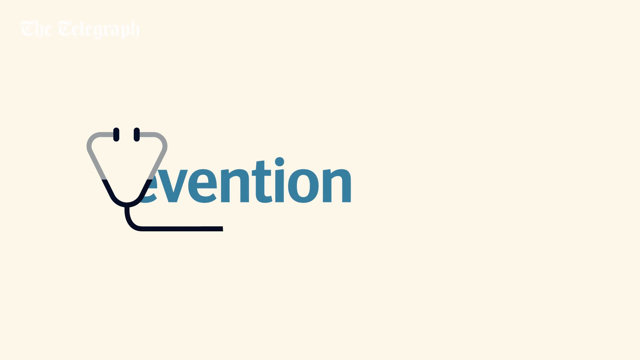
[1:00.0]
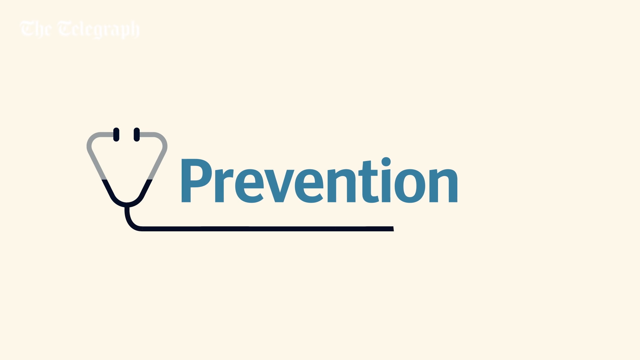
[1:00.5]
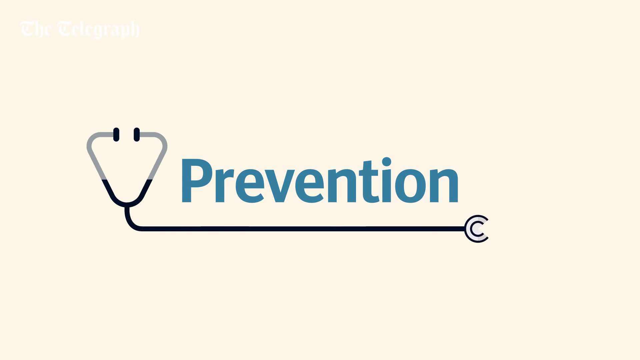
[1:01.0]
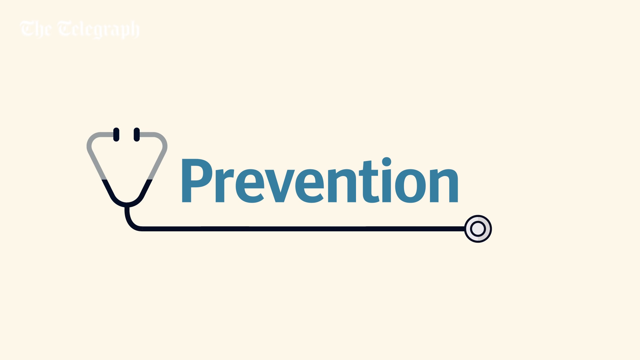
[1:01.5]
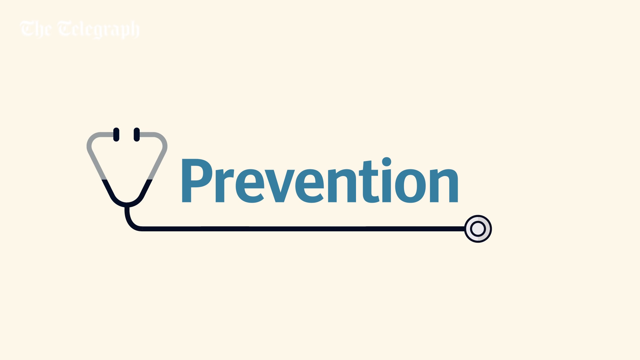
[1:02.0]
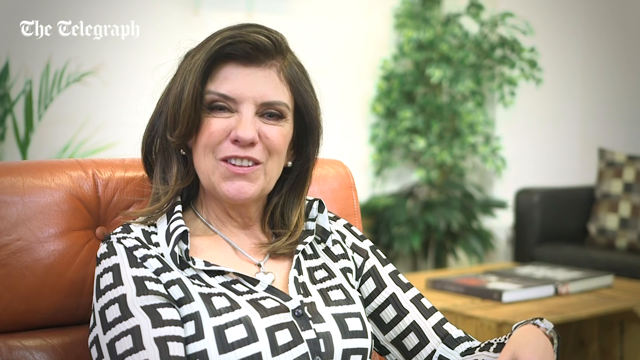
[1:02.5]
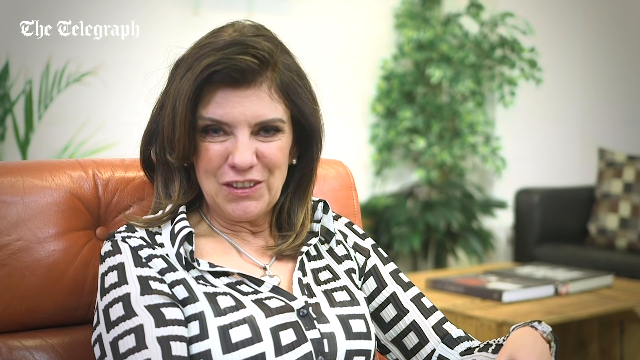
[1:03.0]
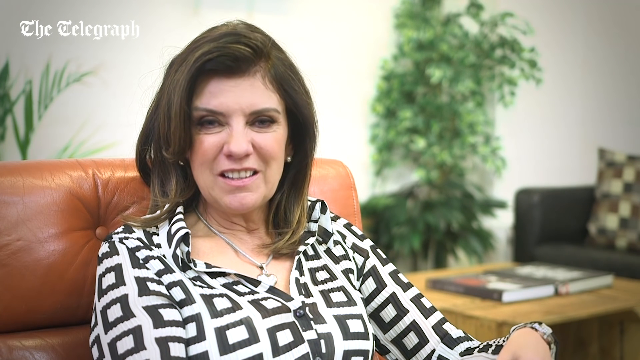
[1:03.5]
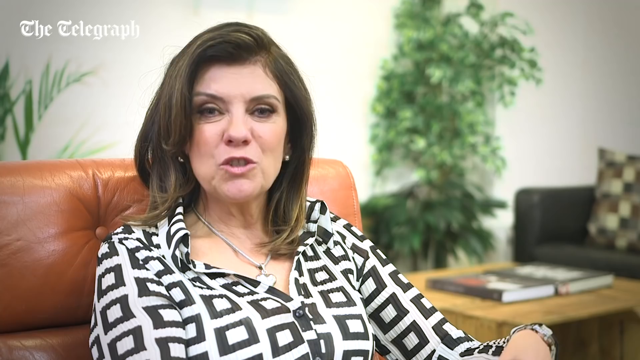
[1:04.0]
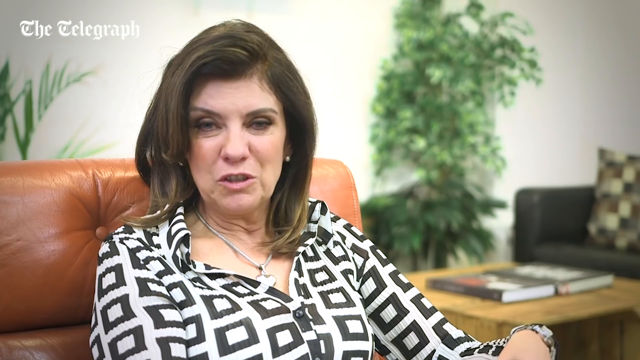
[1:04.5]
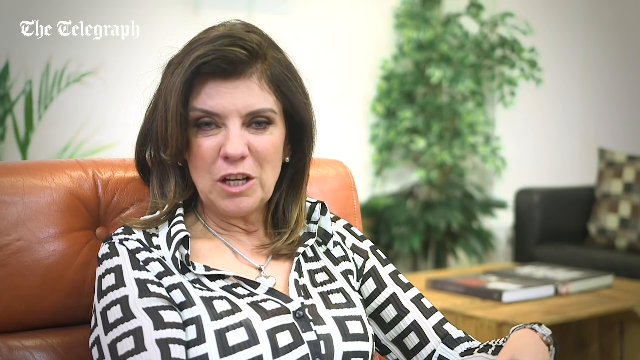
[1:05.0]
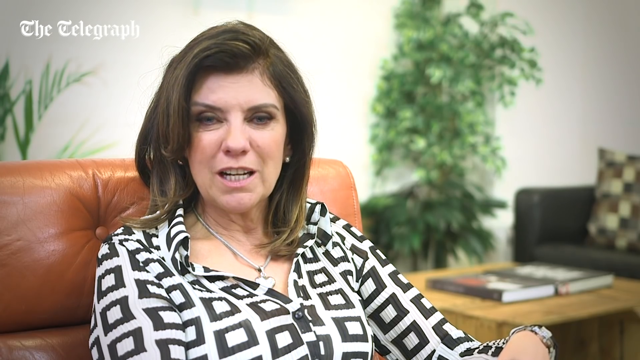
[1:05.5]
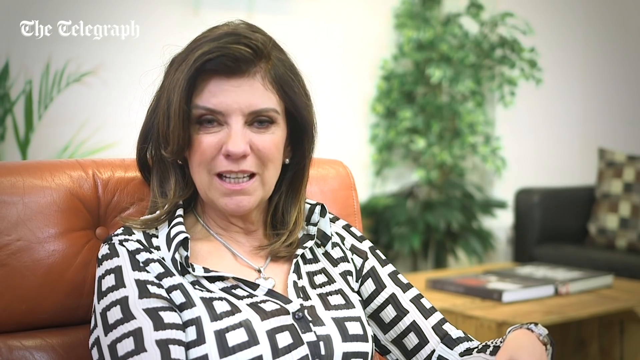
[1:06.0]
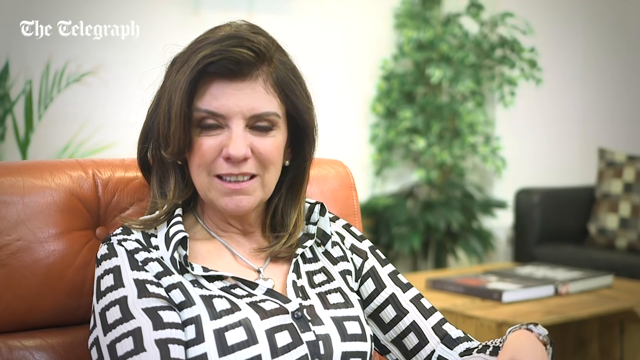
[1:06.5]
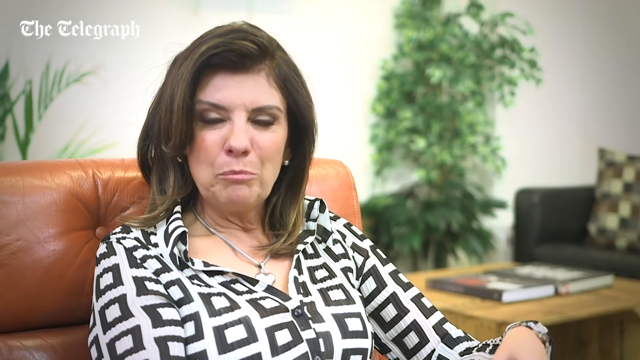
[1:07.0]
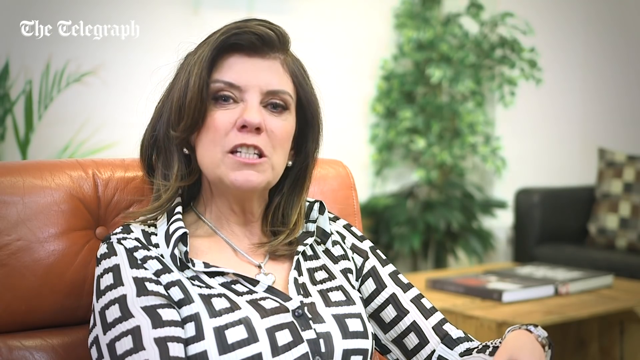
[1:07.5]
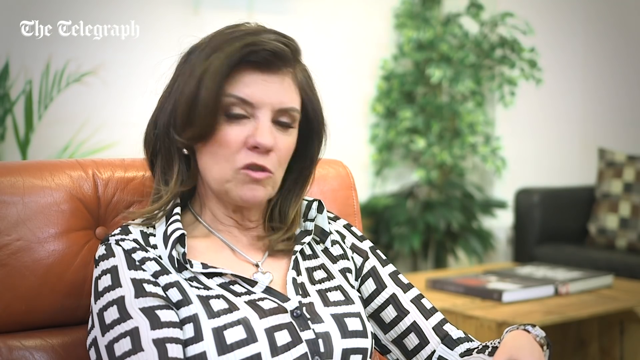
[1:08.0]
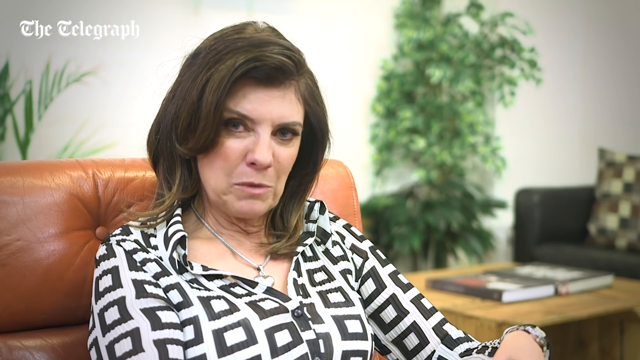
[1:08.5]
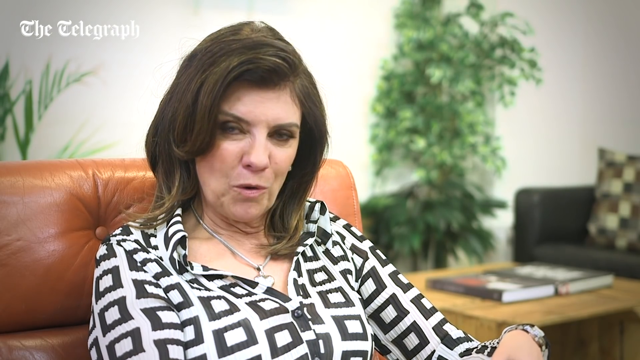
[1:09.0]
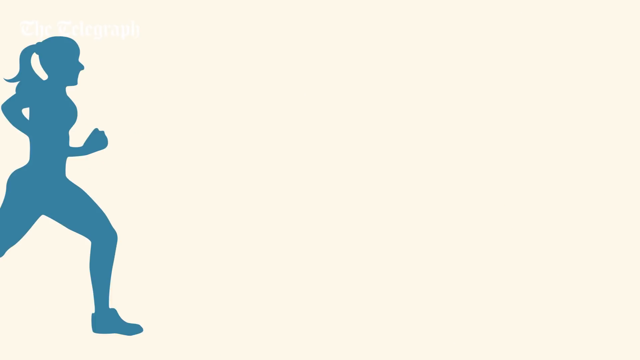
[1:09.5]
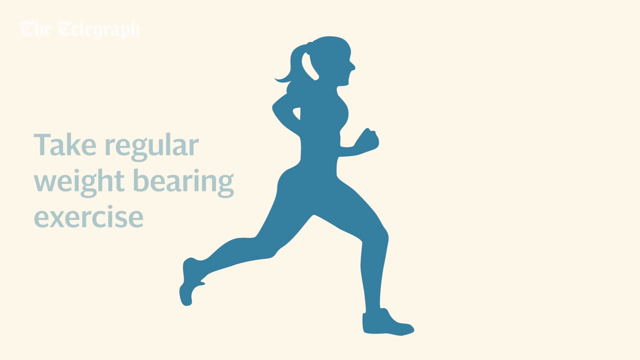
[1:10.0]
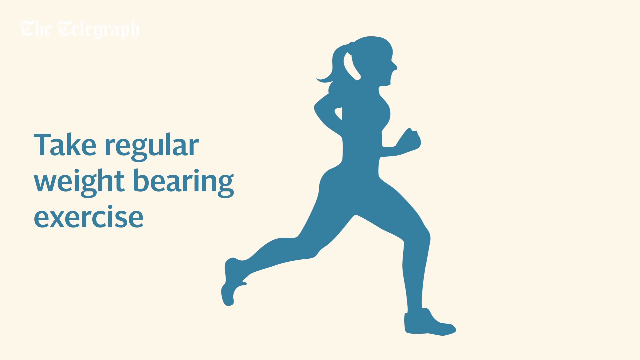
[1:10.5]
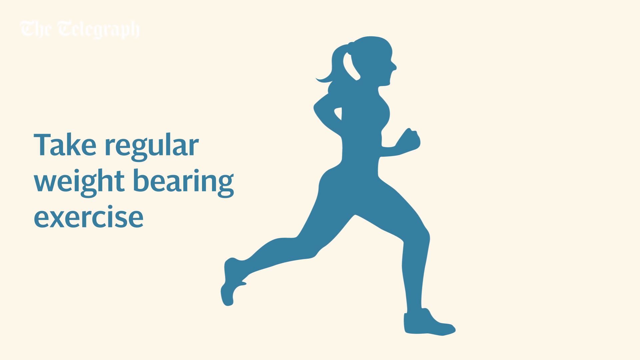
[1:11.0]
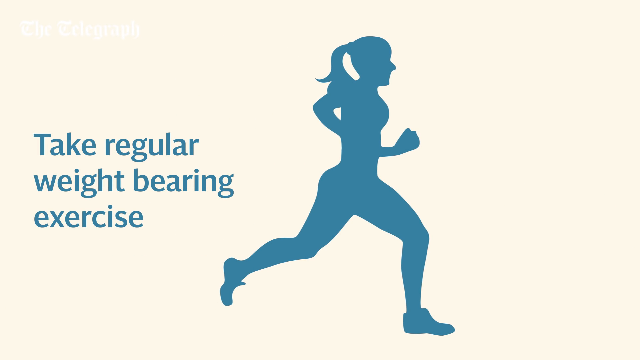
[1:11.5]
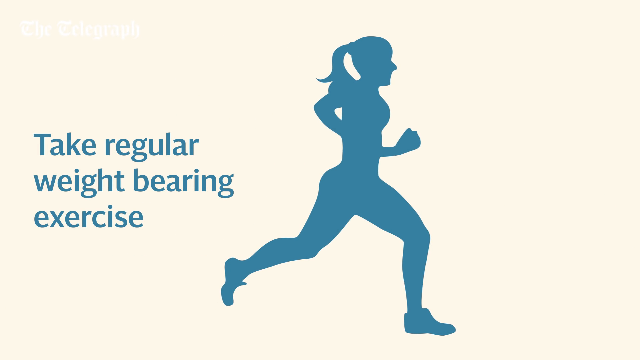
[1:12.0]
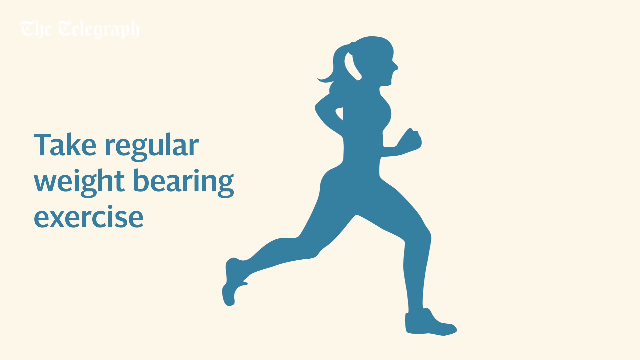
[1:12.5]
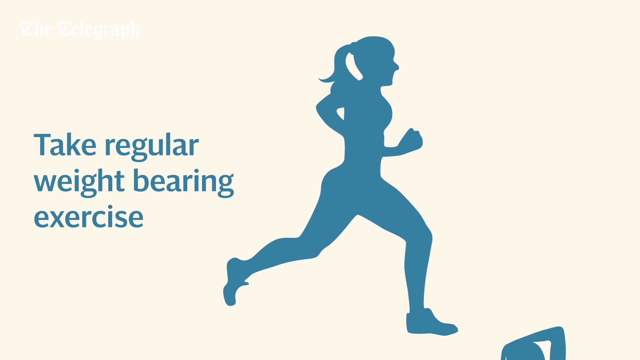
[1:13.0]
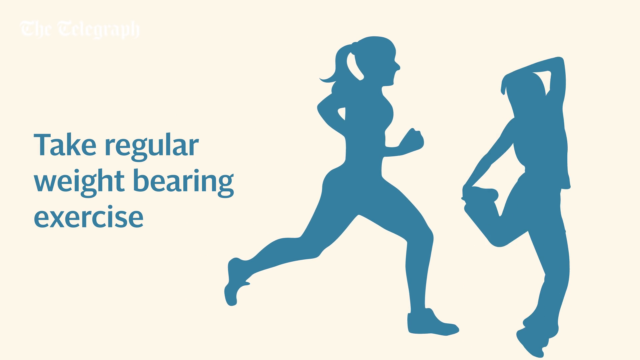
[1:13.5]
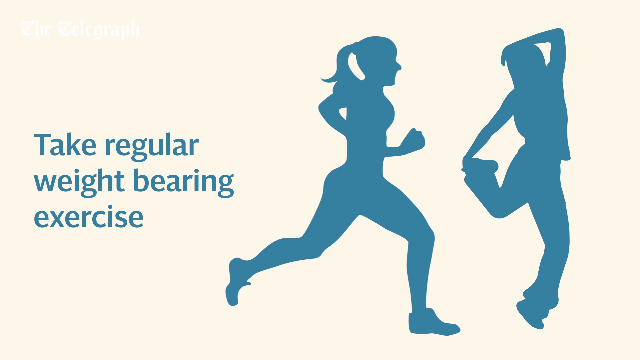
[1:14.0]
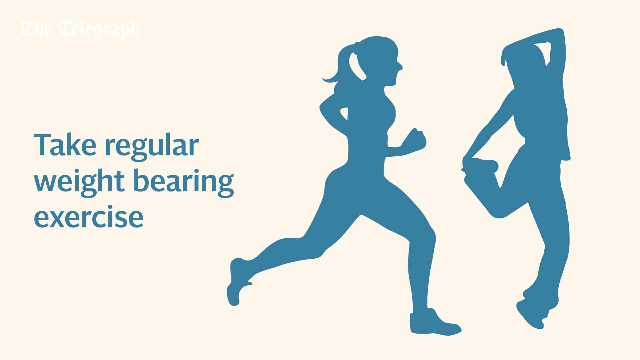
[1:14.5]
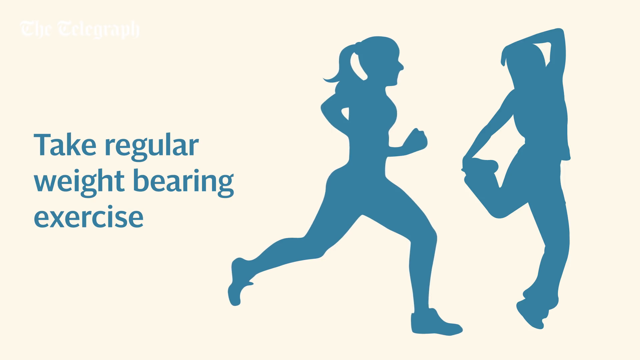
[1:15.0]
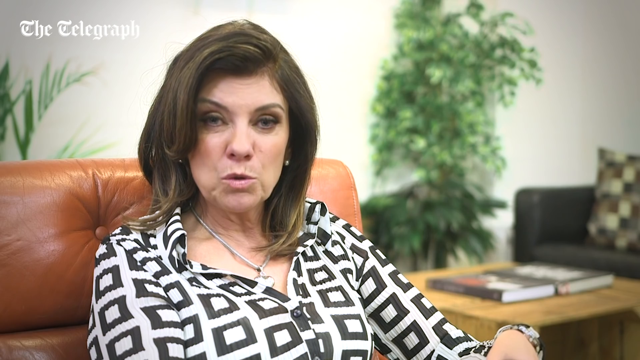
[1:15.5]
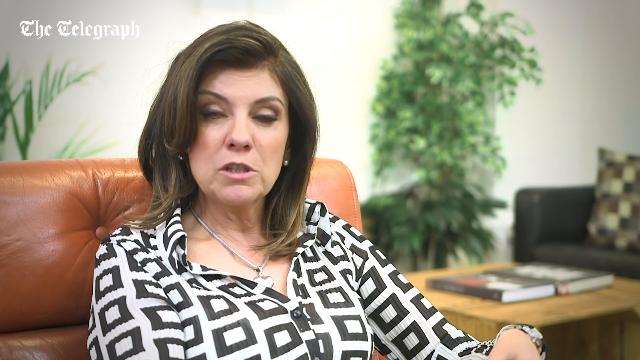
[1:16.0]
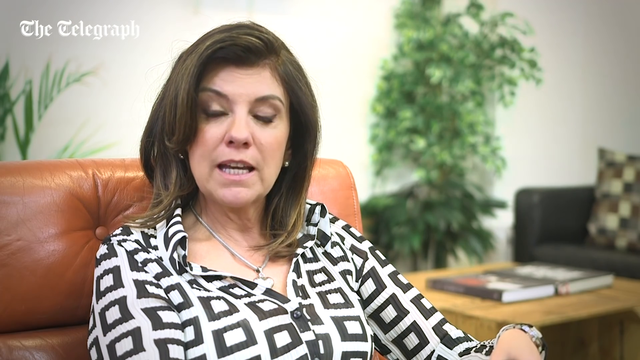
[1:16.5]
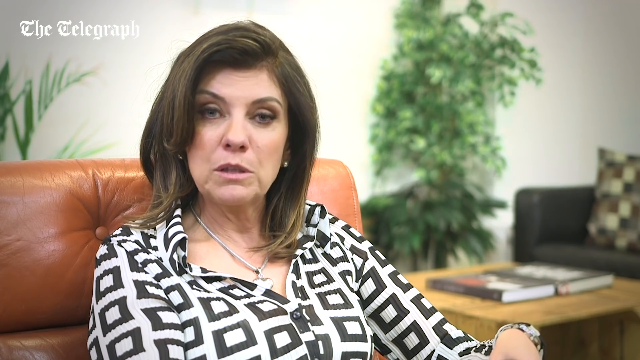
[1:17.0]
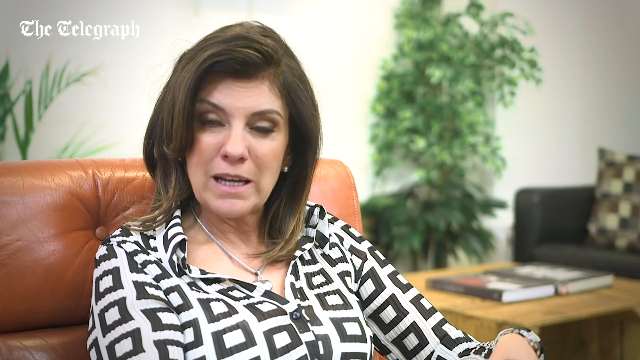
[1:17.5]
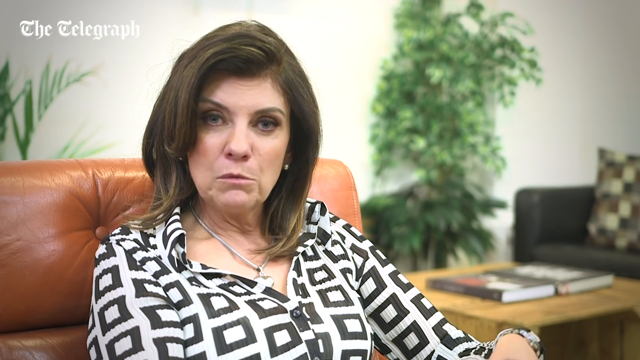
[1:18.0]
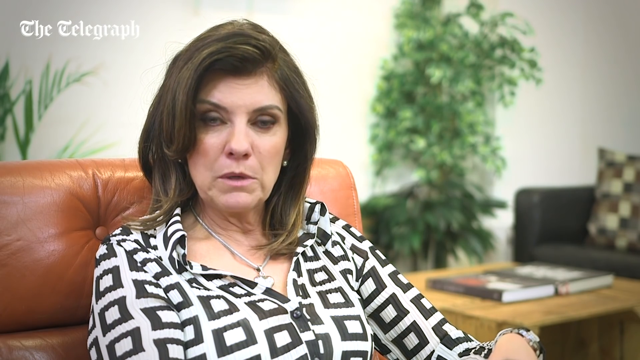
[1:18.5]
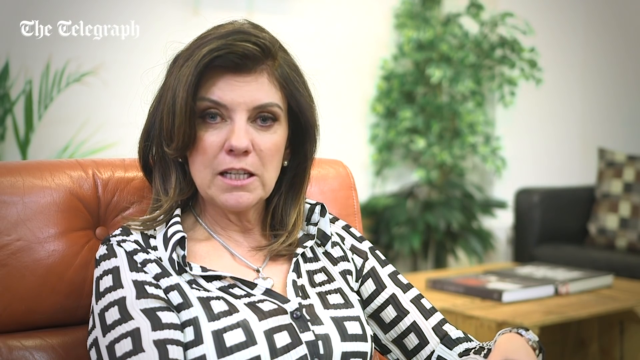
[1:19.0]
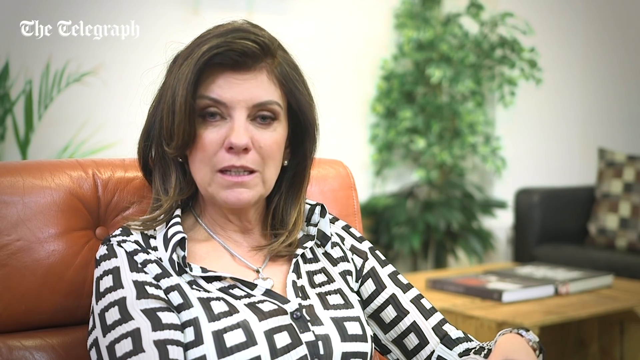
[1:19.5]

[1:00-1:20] The stethoscope shoots out from the bottom, this time underlining the word "prevention" in bold blue text above it. The doctor comes onto the screen, smiling as she continues to talk into the camera, her hands slightly visible in the bottom corner. The outline of a running woman appears from the left; she has her hair up and is striding forward with her right foot. Blue text on the left-hand side reads "take regular weight bearing exercise". An outline of another woman follows, who looks like she is dancing or stretching, holding her right foot in her right hand with her left foot on the ground. The video pans to the doctor, who continues to speak, looking directly into the camera lens.